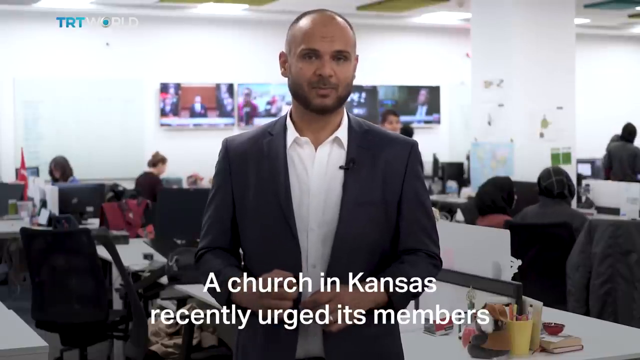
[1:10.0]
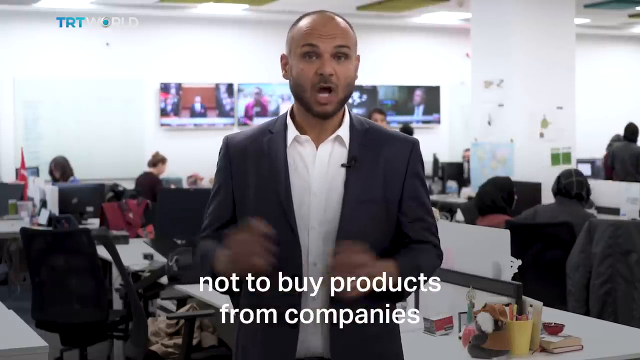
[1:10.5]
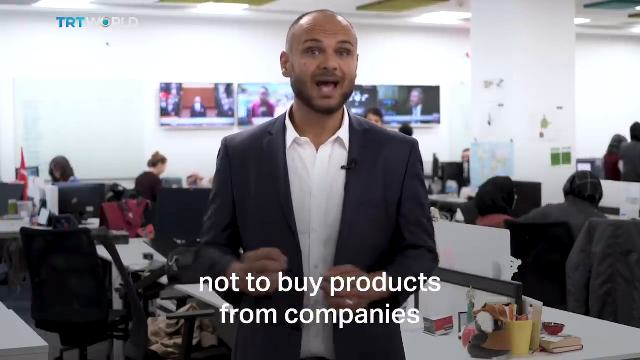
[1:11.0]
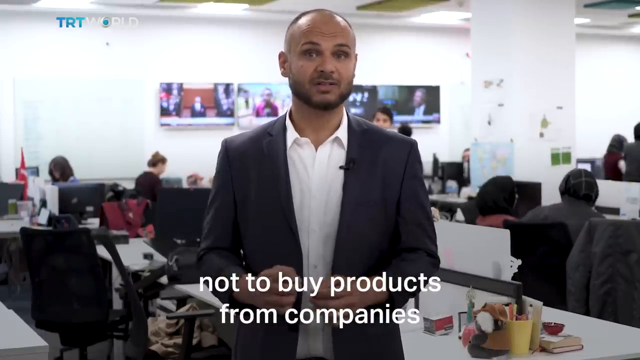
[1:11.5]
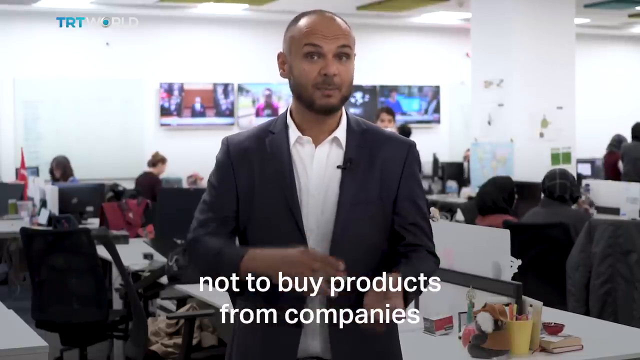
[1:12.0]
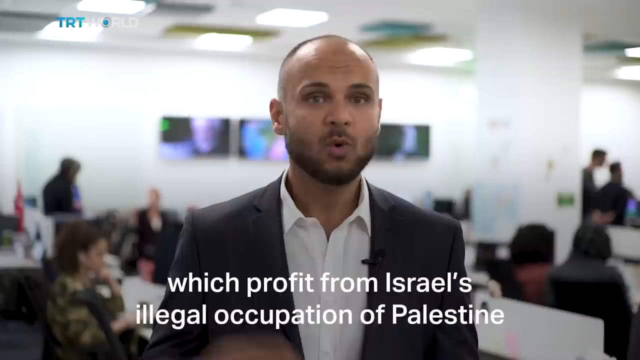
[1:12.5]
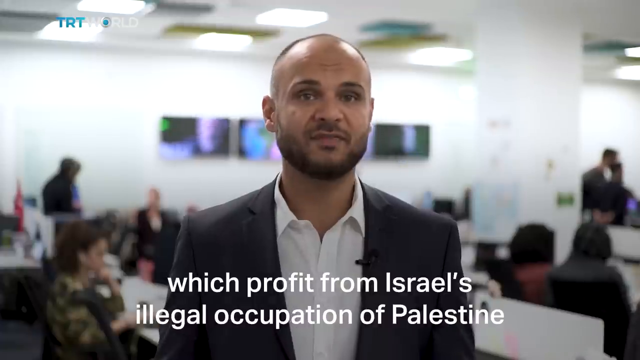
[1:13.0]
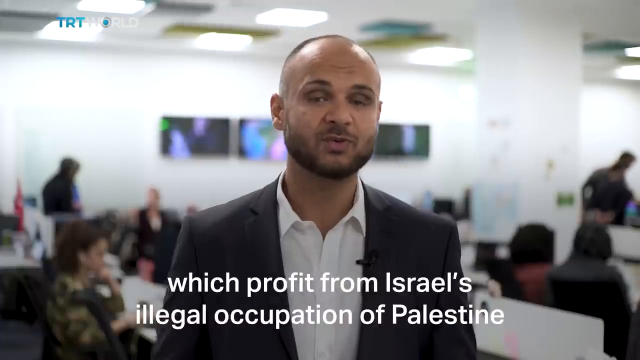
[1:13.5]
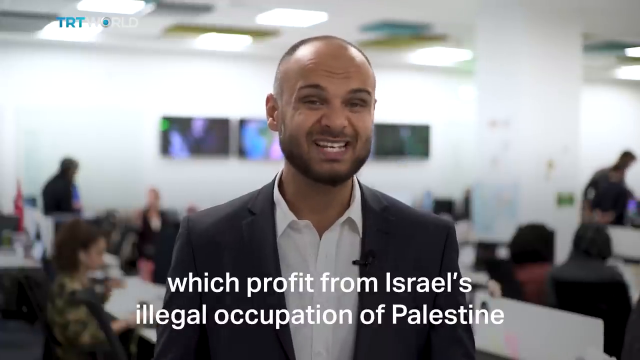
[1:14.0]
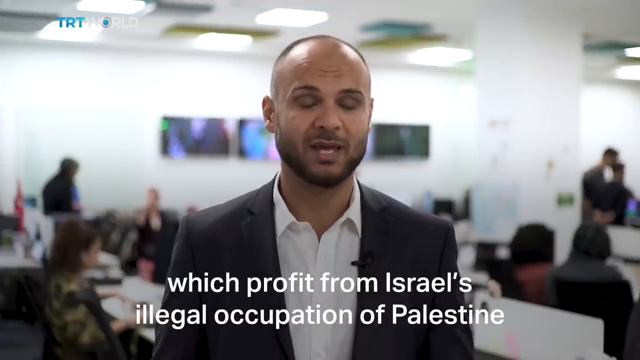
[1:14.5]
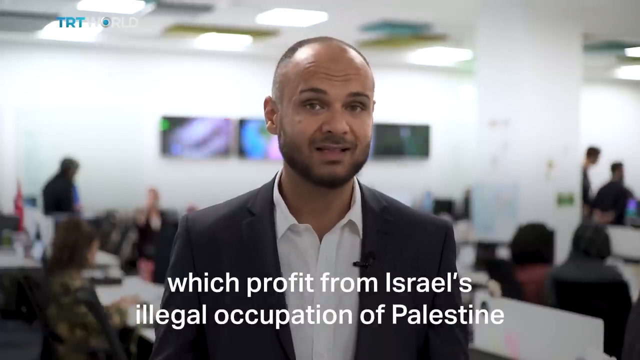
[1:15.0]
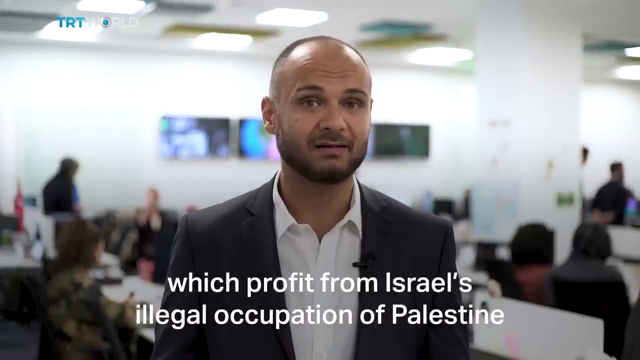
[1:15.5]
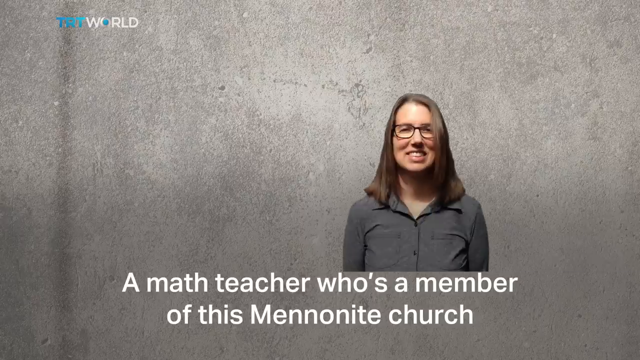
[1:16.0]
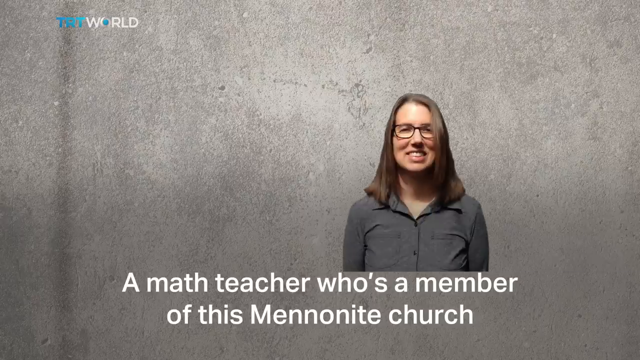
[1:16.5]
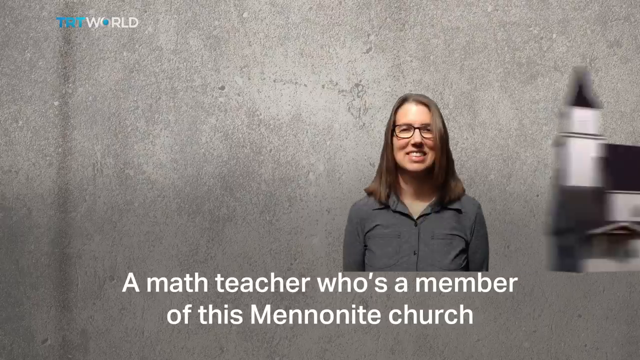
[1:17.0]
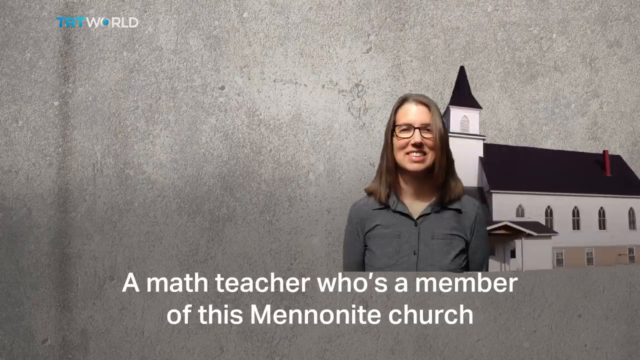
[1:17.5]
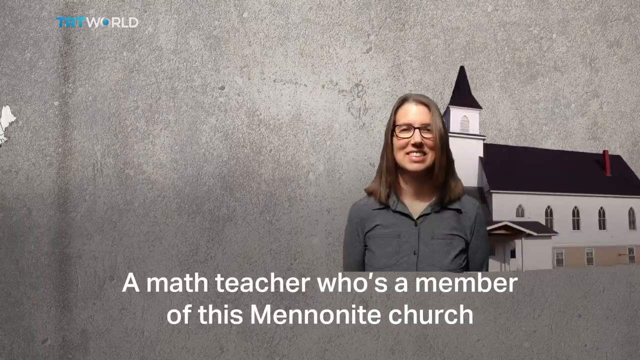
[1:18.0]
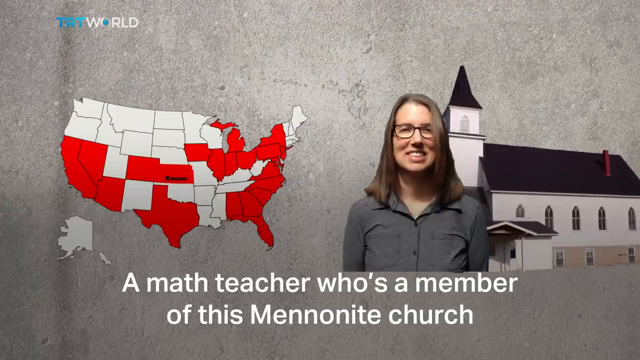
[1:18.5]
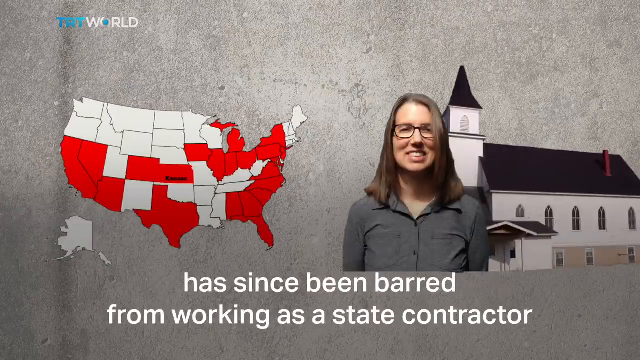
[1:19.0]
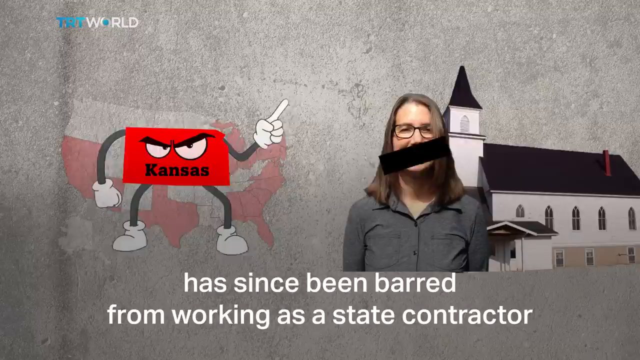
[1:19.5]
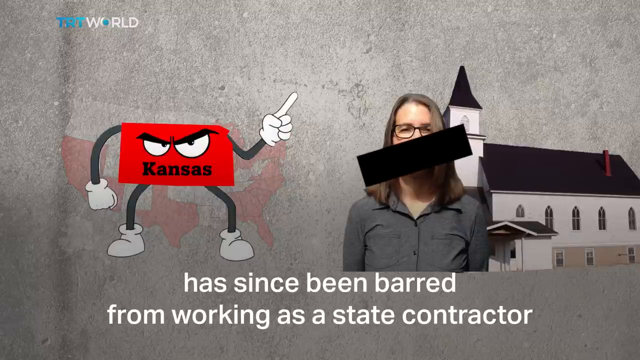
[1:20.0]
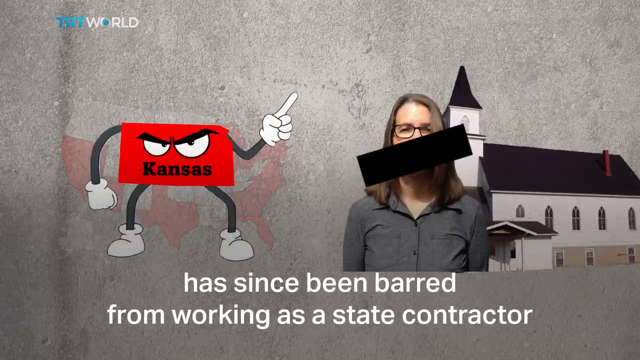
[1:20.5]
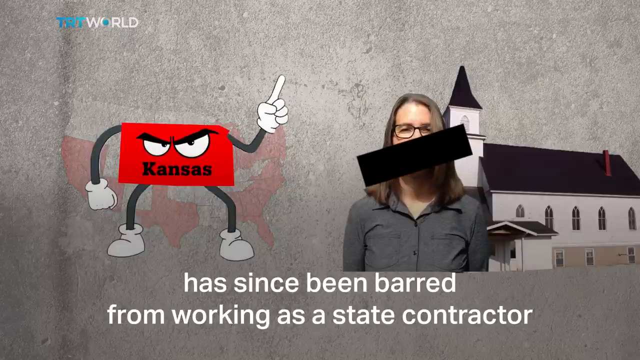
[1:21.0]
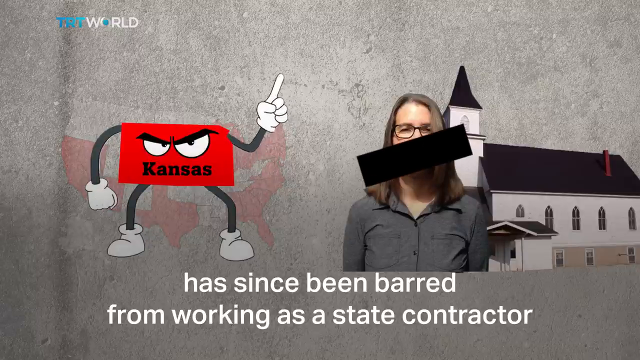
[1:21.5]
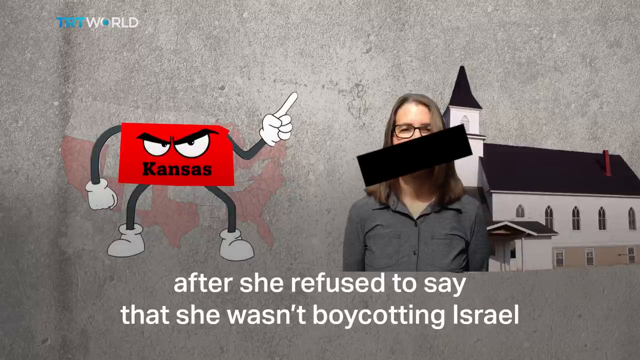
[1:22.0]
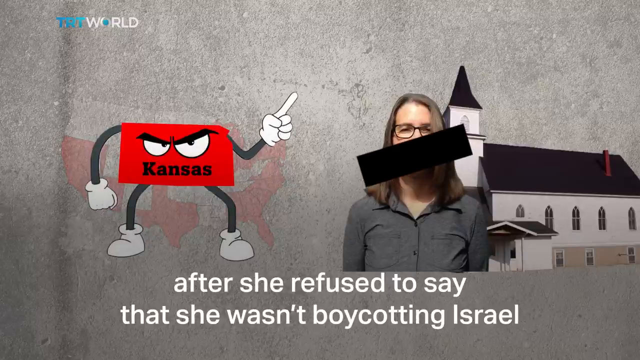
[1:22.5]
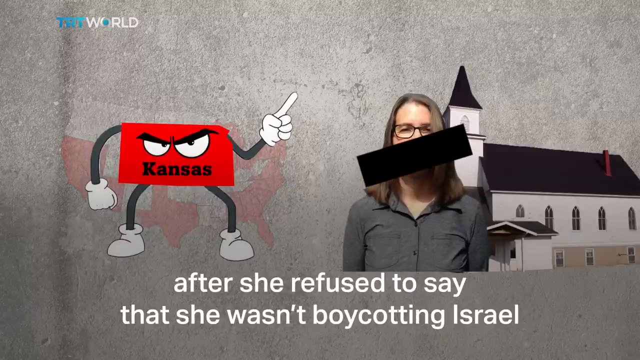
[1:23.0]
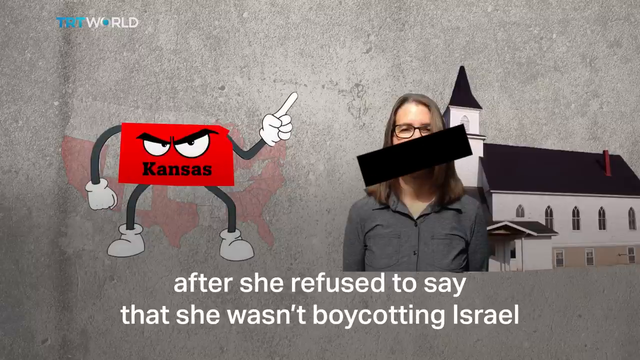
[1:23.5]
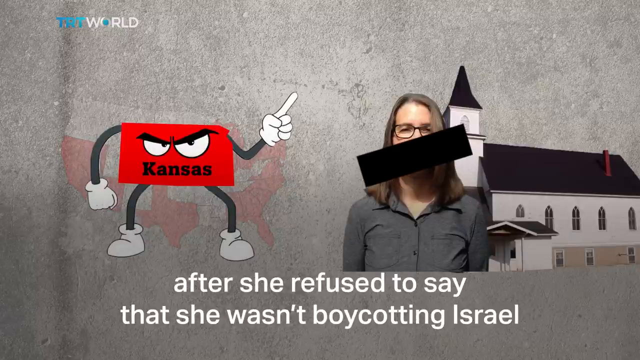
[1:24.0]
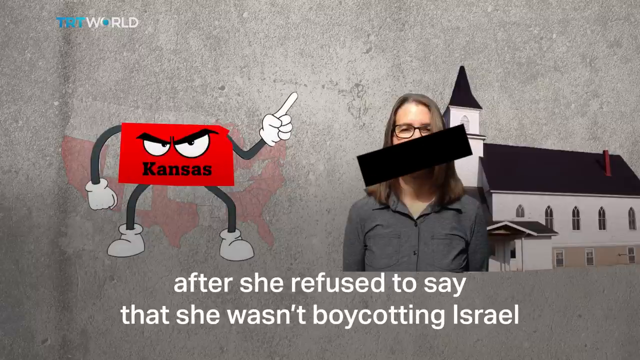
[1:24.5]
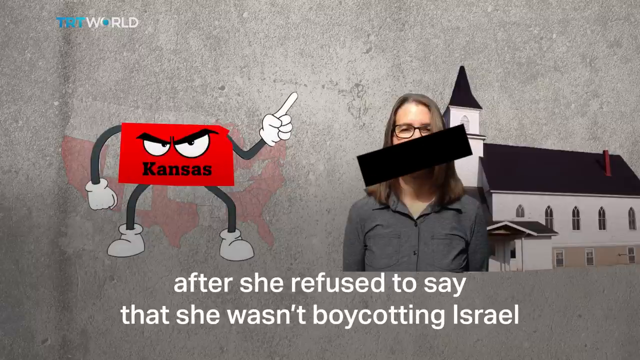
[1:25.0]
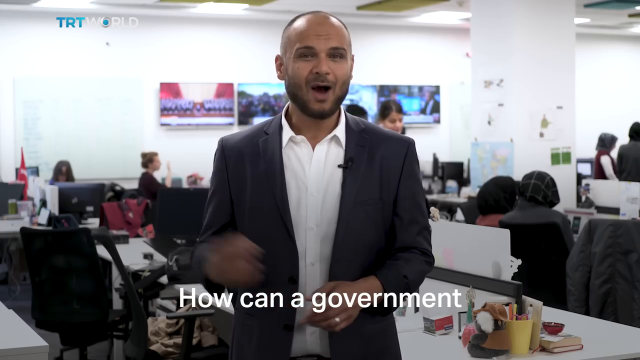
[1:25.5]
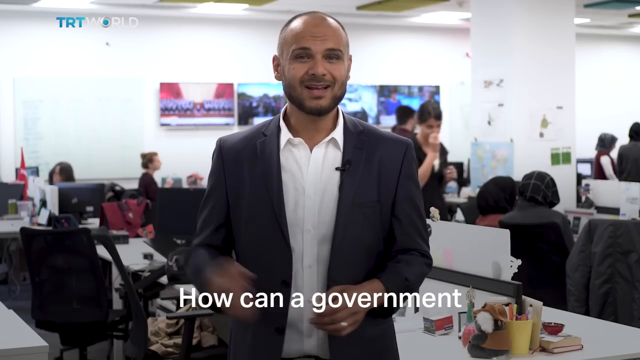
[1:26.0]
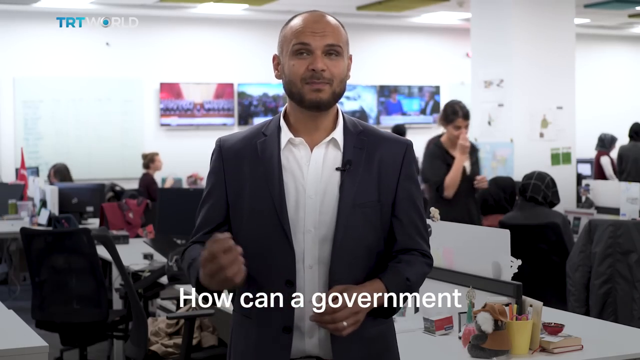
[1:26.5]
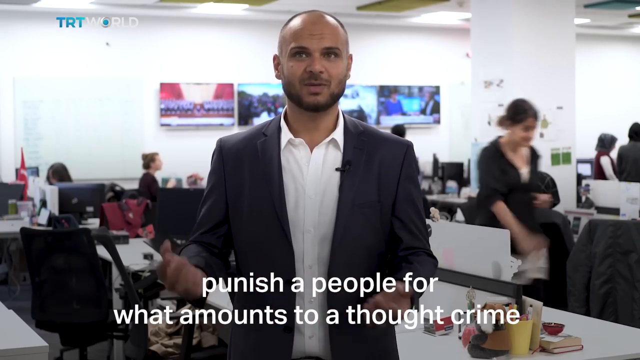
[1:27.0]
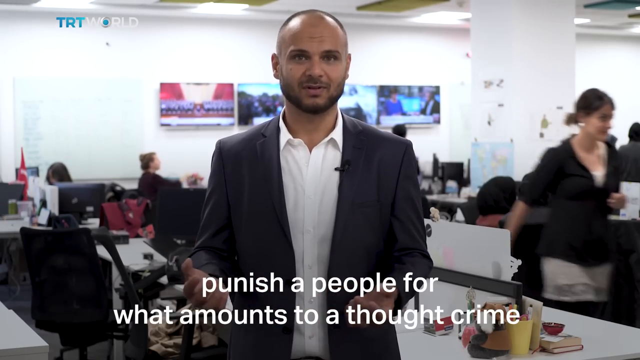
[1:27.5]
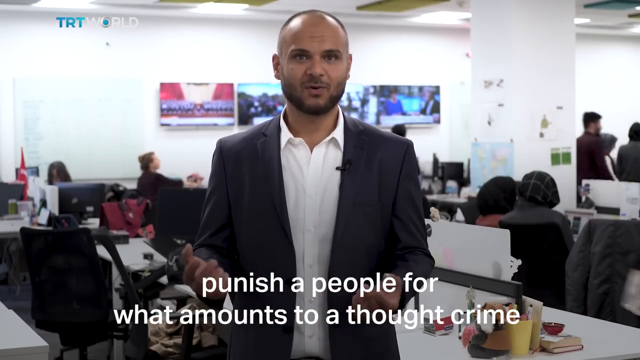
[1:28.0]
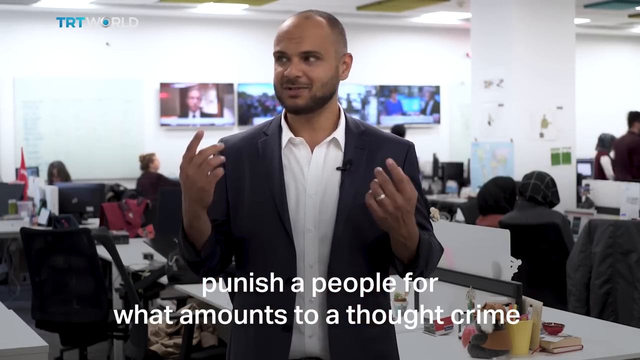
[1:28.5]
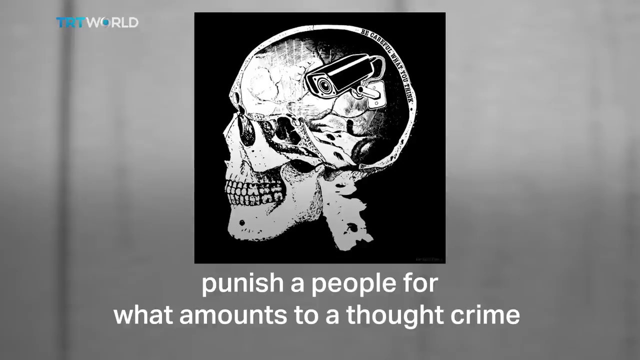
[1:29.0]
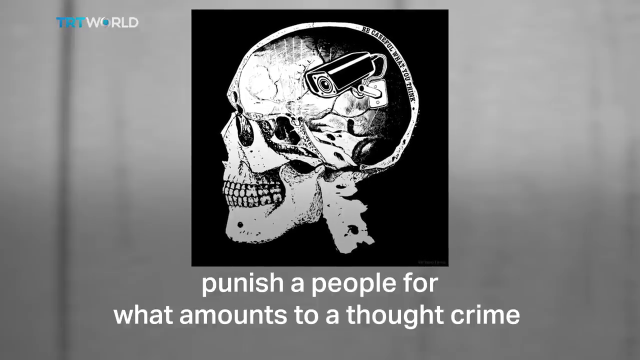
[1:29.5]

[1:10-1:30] Captions at the bottom of the screen continue: "A church in Kansas has recently urged its members not to buy products from companies which profit from Israel's illegal occupation of Palestine. A math teacher who is a member of this Mennonite church." A photo of the teacher is shown: she wears a grey top or grey shirt, has long hair and spectacles, and what is kind of a school or a church is behind her. The map of America with the red-marked states is shown. The captions continue, "the teacher has been barred from working as a state contractor by Kansas." An animation-style cartoon appears with "Kansas" written on it in red, pointing toward the teacher. The news anchor's question continues: "how can a government punish people for what amounts to a thought crime?" On the screen appears an MRI-style image of a head and skull, with a CCTV camera in the brain section.